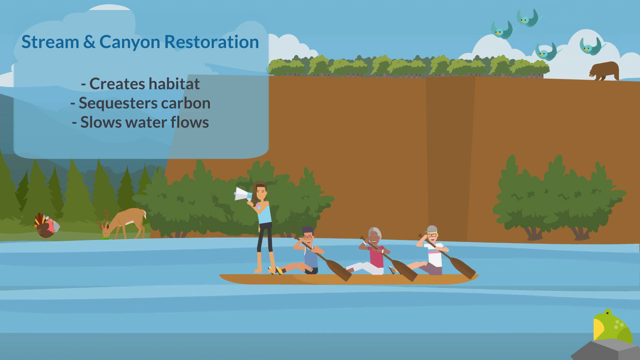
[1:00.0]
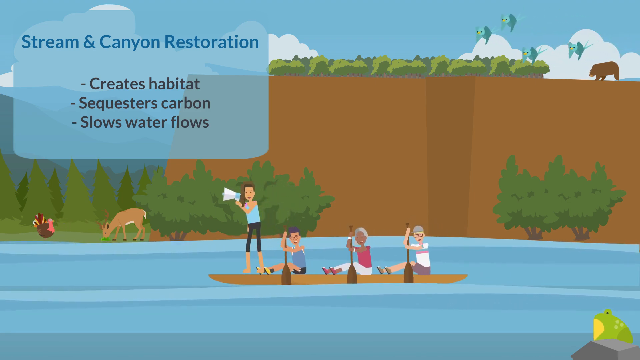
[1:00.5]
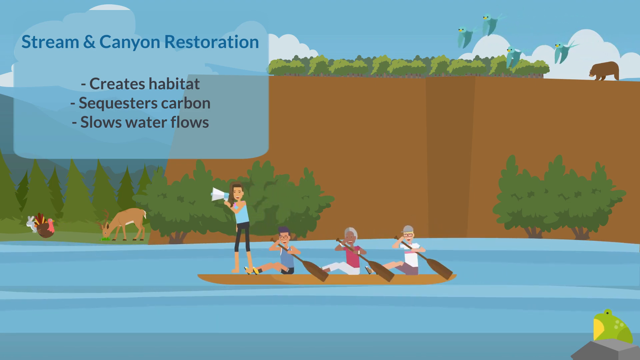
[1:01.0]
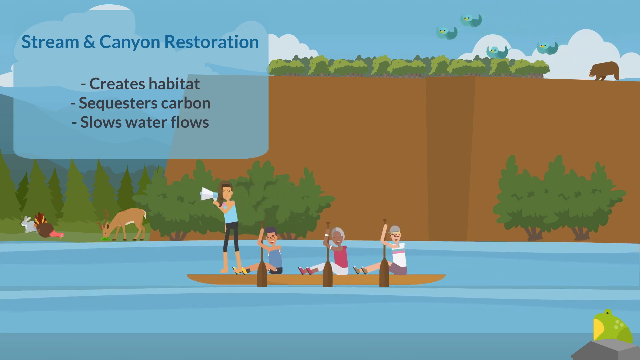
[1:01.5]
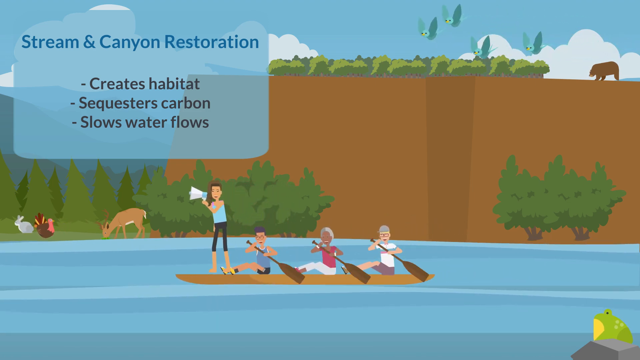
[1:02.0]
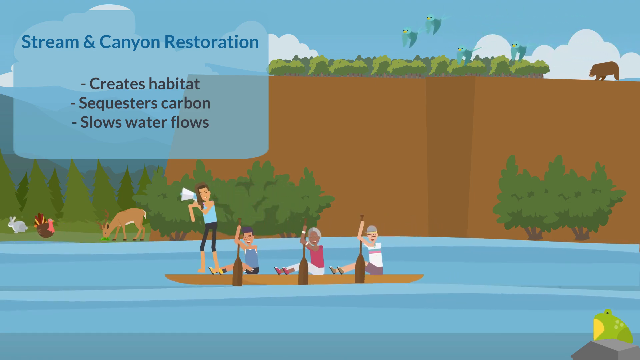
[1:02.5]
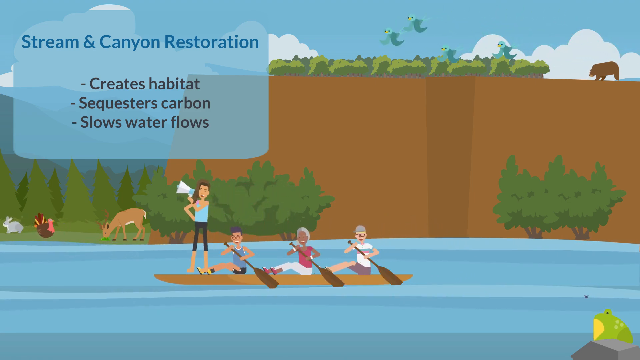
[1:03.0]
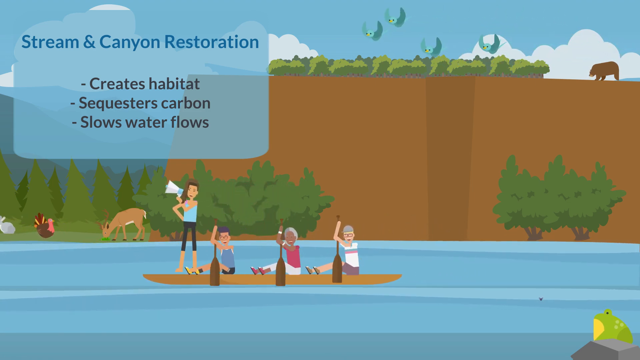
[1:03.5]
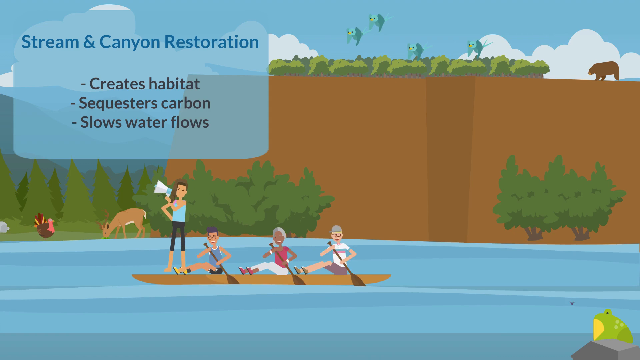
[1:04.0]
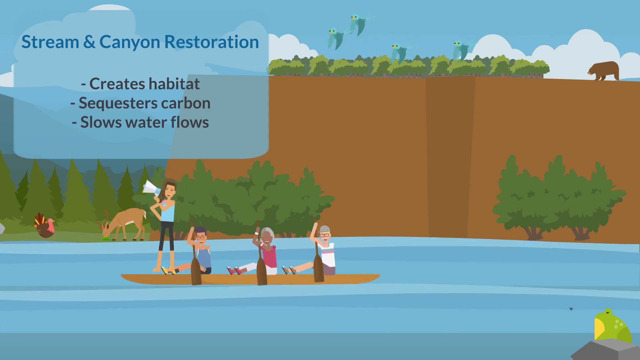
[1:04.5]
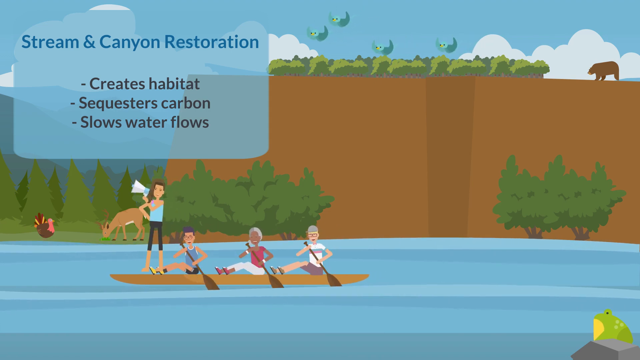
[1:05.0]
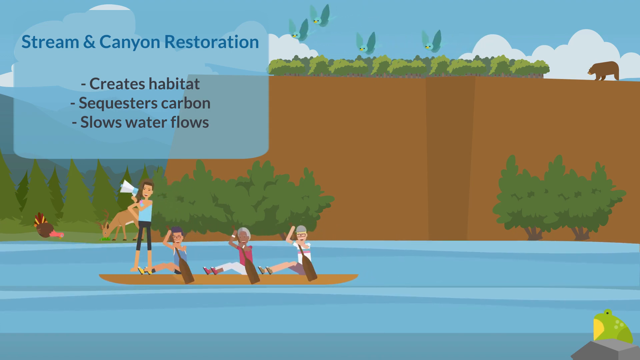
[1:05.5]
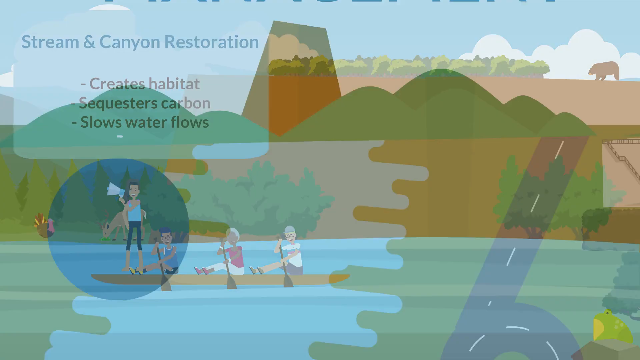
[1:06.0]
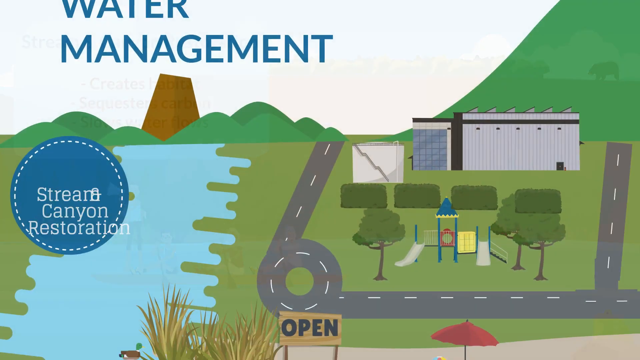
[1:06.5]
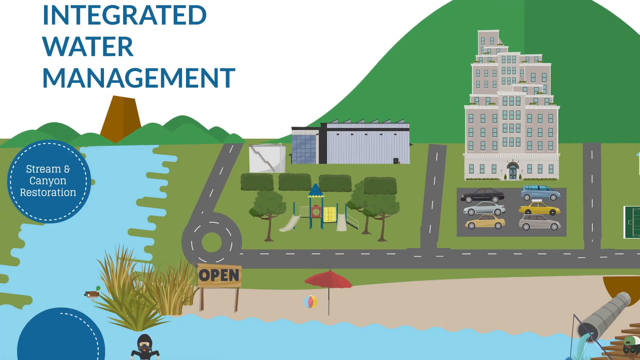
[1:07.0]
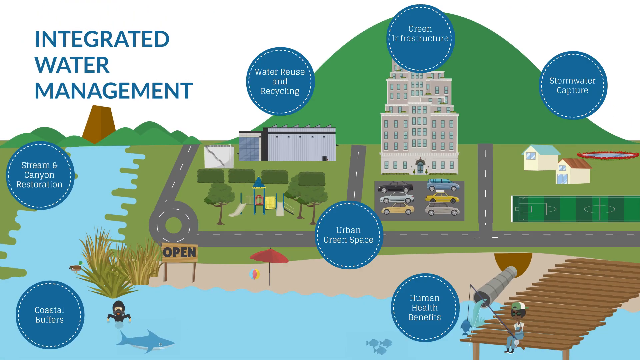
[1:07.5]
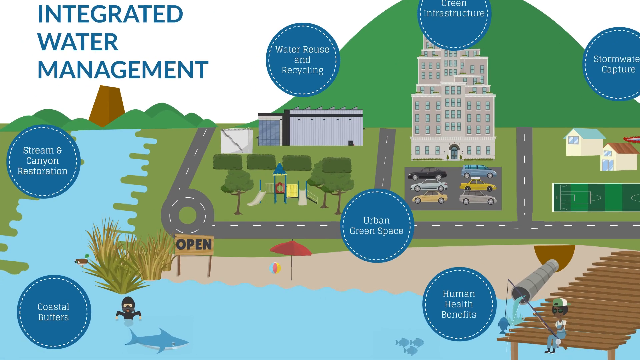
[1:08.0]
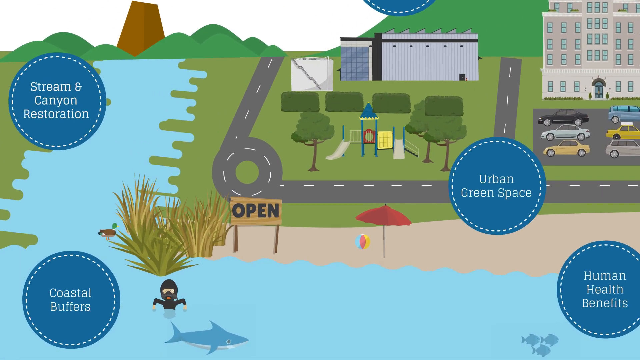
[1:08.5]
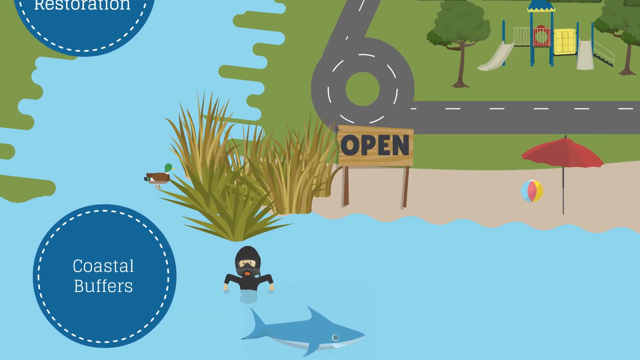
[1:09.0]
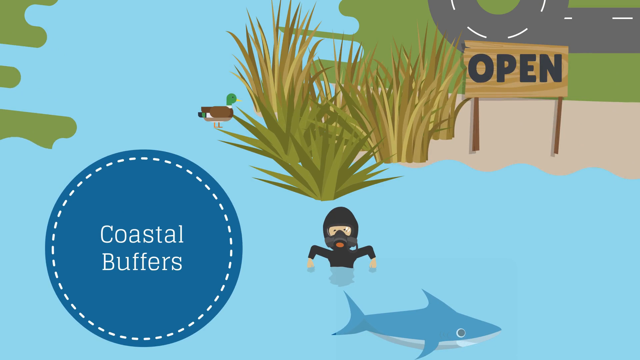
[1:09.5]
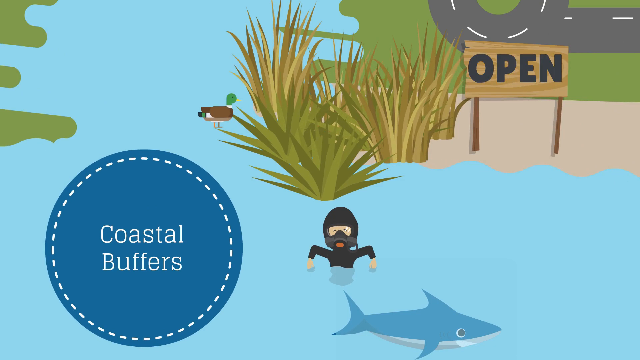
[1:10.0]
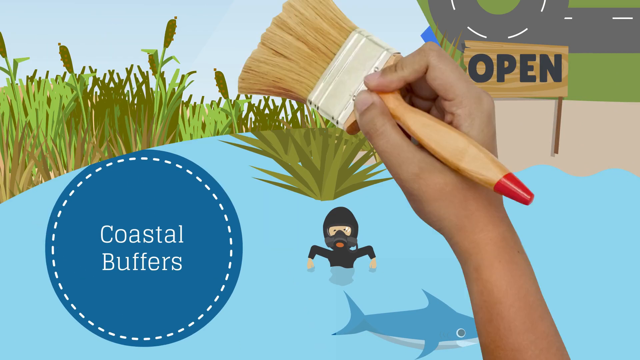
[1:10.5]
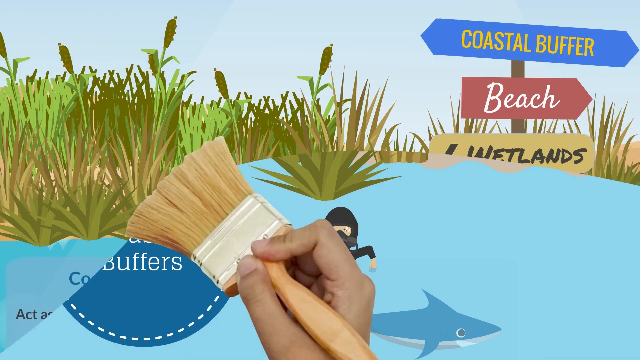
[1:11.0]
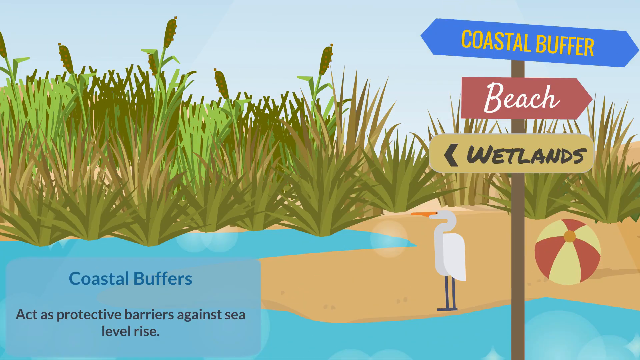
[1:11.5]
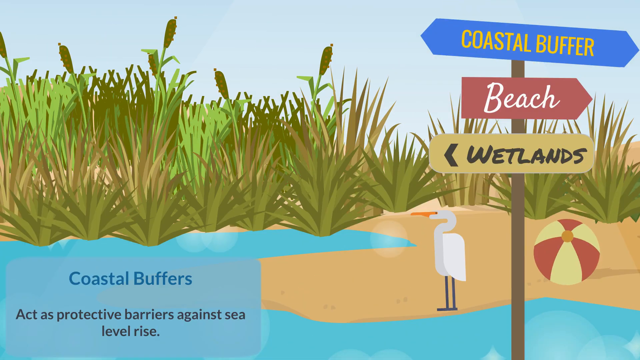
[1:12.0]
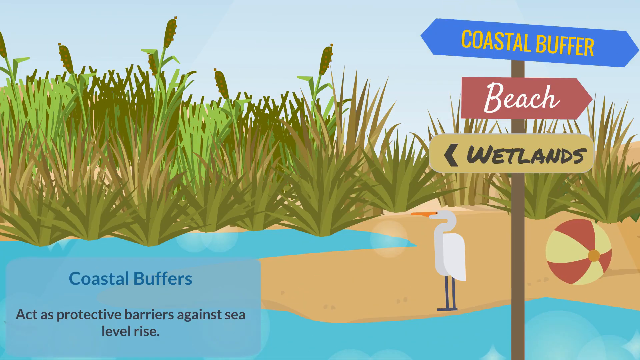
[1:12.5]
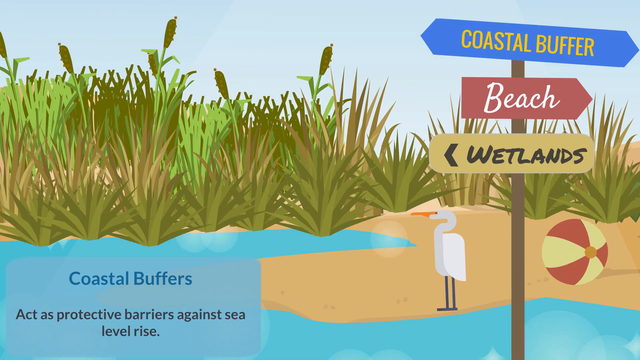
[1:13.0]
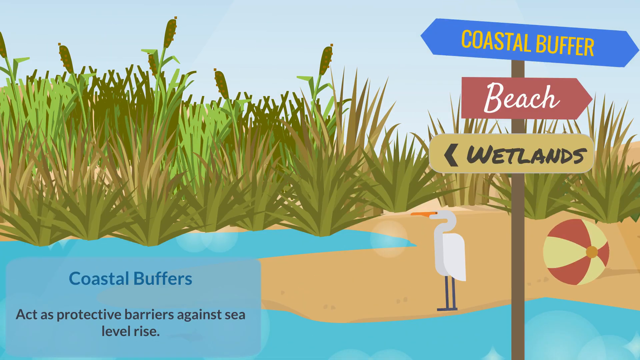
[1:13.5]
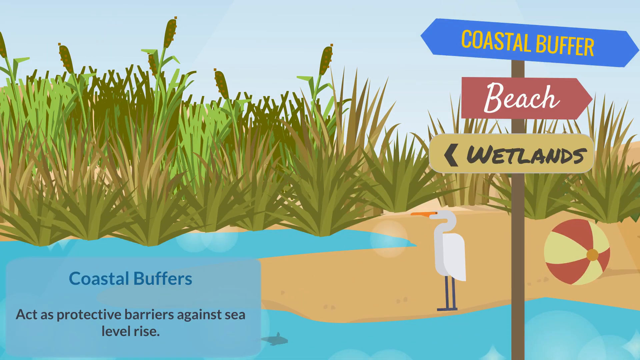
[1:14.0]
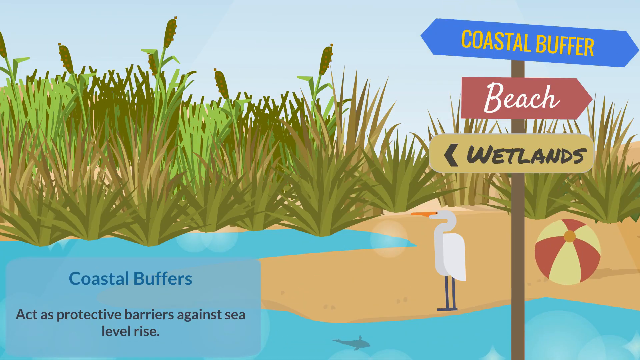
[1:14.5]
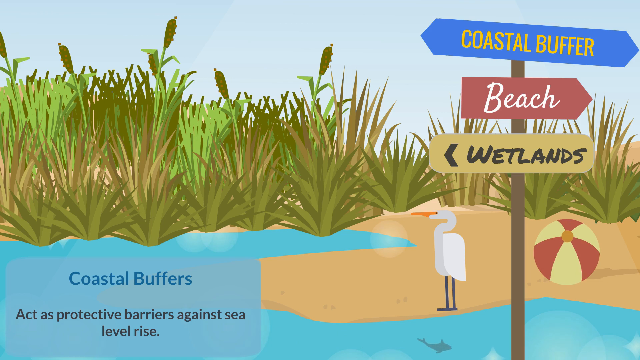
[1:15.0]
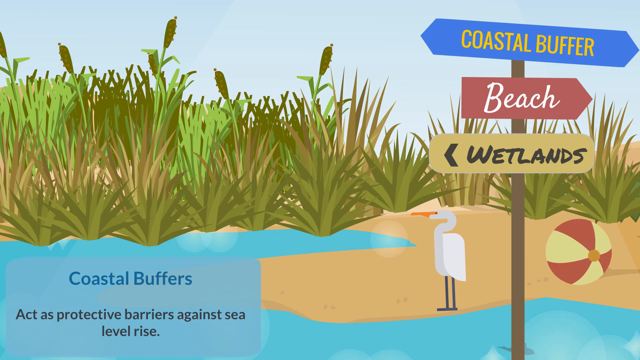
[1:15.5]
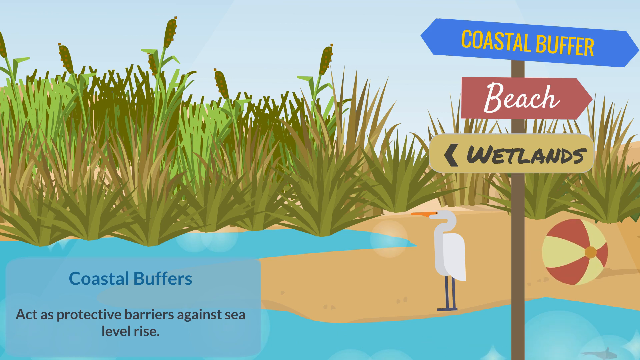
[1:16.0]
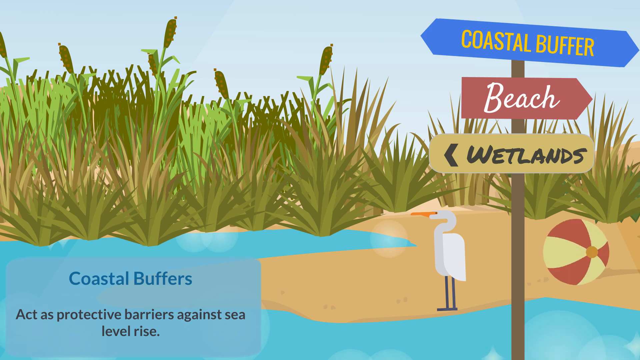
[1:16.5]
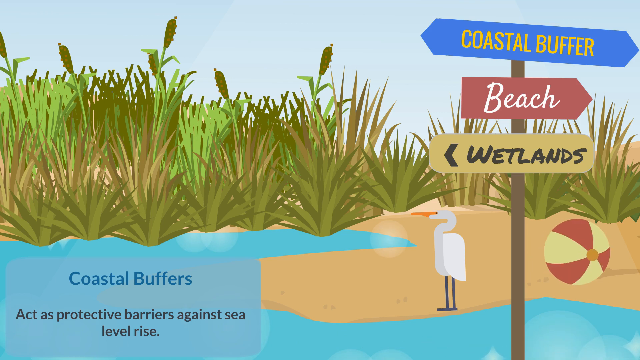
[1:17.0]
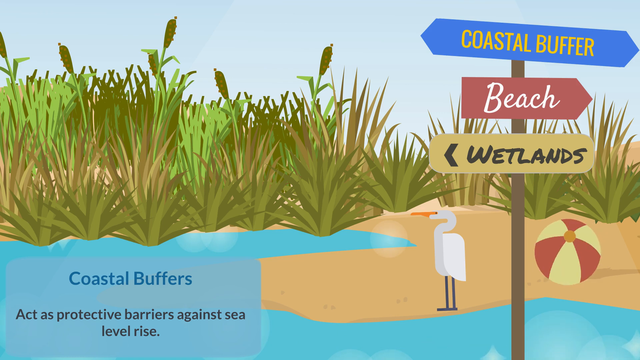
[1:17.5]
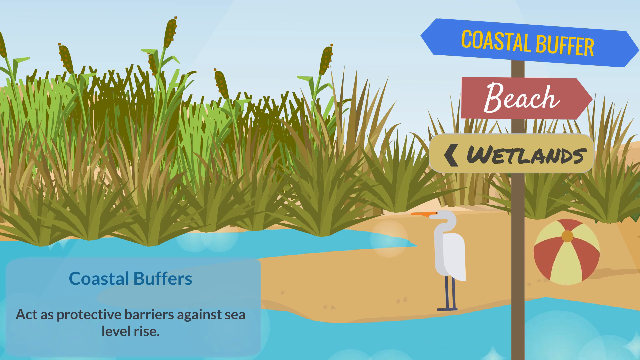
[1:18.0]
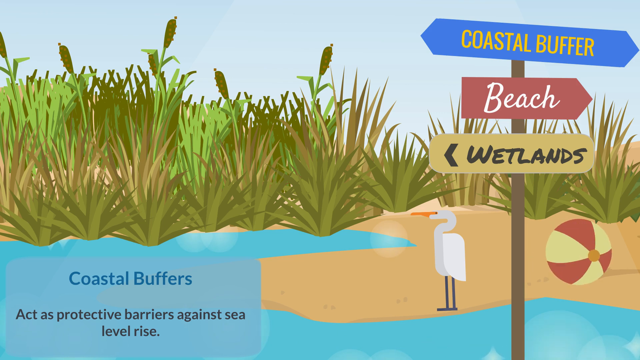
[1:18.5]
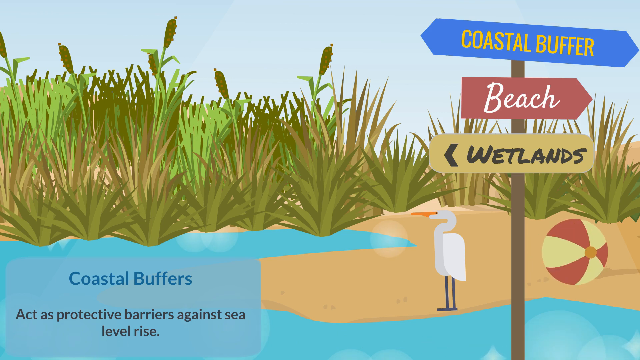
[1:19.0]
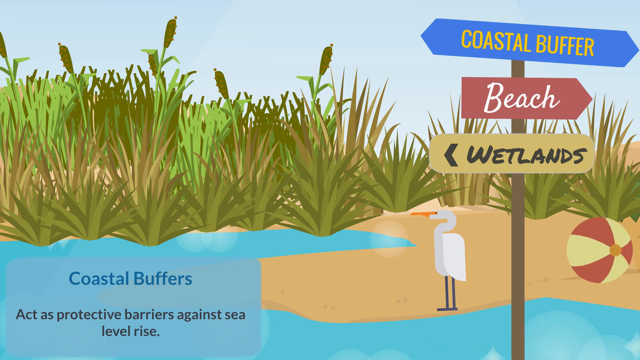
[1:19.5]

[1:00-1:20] The scene of the people canoeing with "stream and canyon restoration" gives way to coastal buffers. Text reads "coastal buffers," "beach" and "wetlands," and "Act as protective barriers against sea level rise." A beach scene shows a red and yellow beach ball, a little bit of beach and a little bit of blue water, along with the people canoeing. On the beach is what looks like a white pelican with an orange beak and black legs. In the background is some green shrubbery like that found in wetlands. In the right-hand corner is a sign: the top sign is blue with yellow writing reading "coastal buffers"; the middle sign is red with white writing reading "beach" and points to the right; the third sign is yellow with black writing reading "wetlands" and points to the left, where plants that look like wetland plants grow.